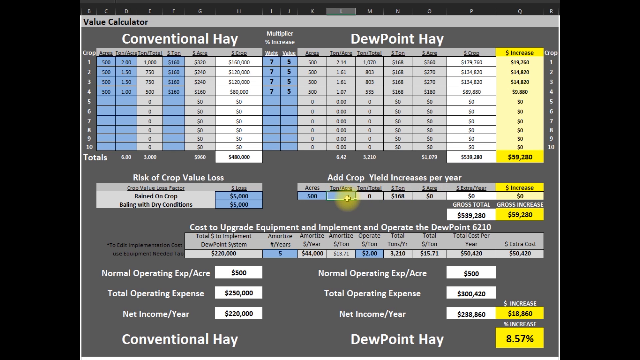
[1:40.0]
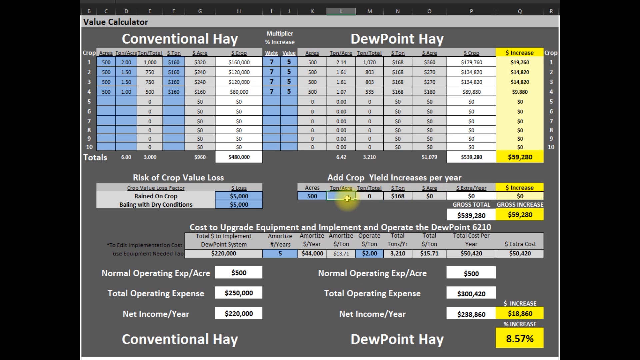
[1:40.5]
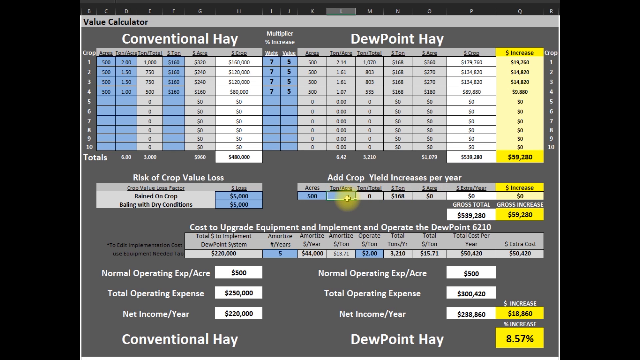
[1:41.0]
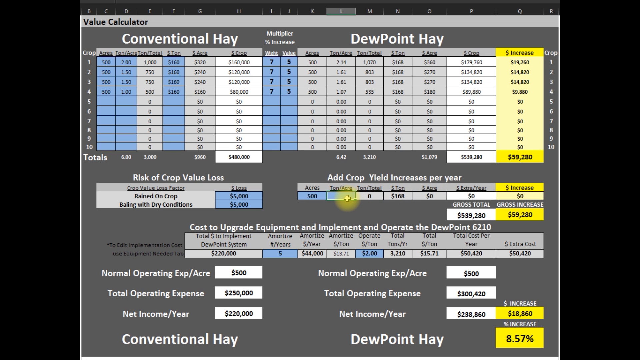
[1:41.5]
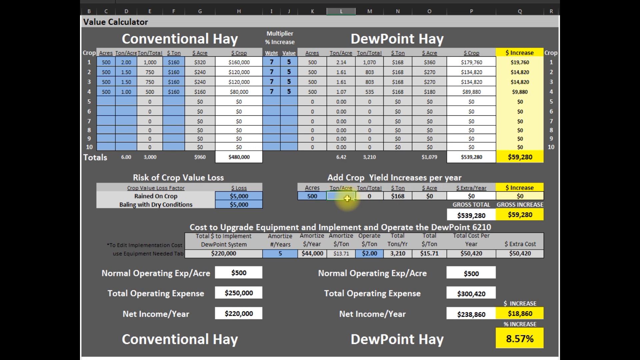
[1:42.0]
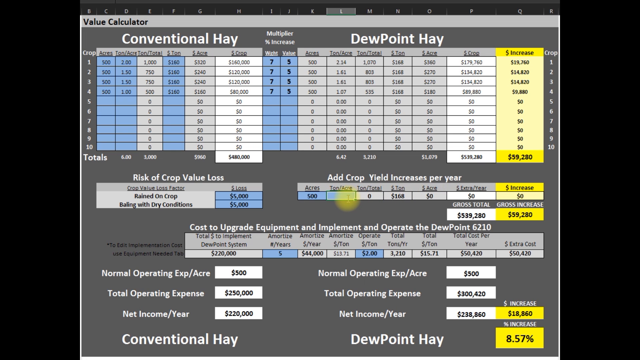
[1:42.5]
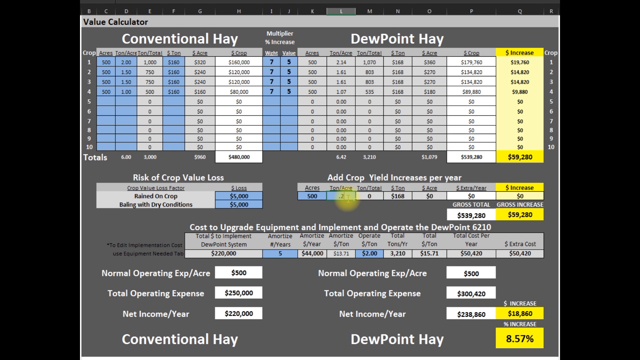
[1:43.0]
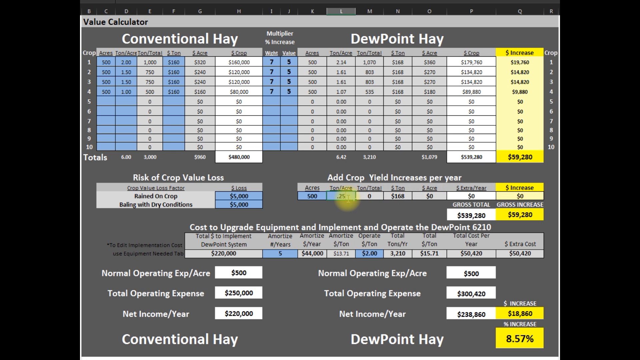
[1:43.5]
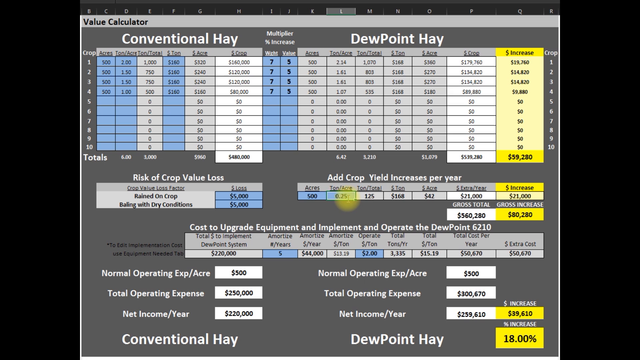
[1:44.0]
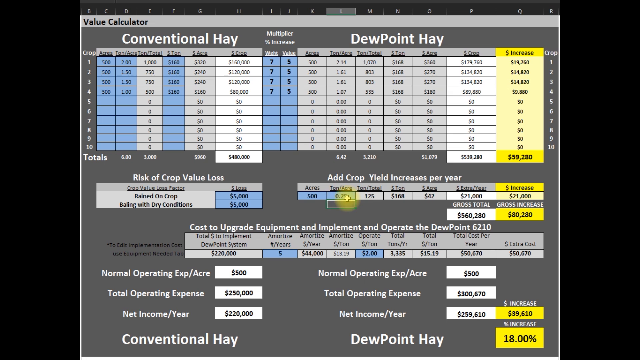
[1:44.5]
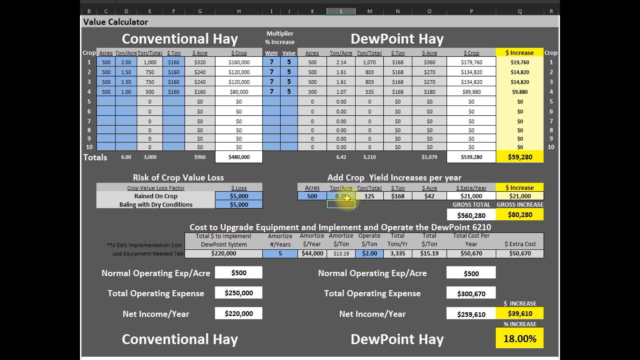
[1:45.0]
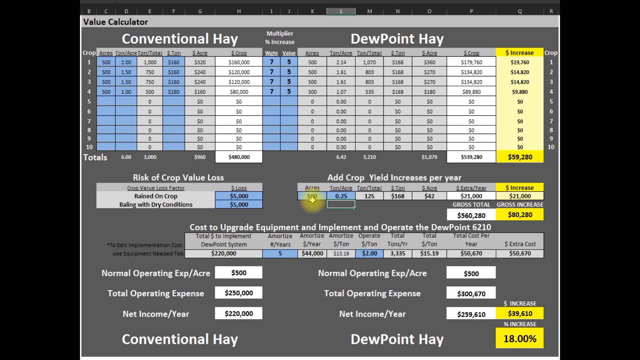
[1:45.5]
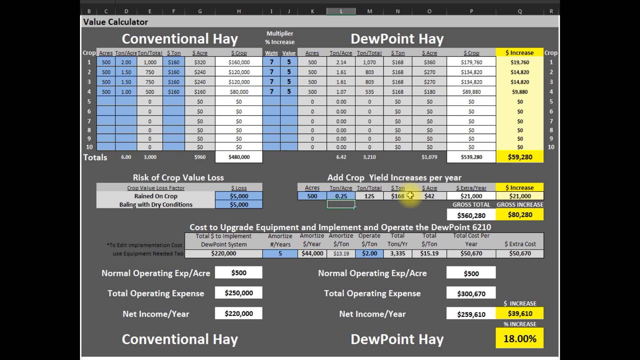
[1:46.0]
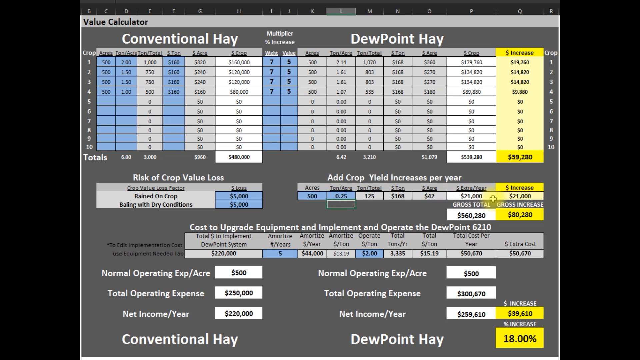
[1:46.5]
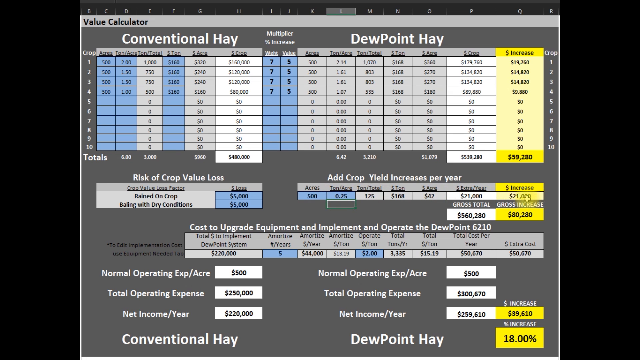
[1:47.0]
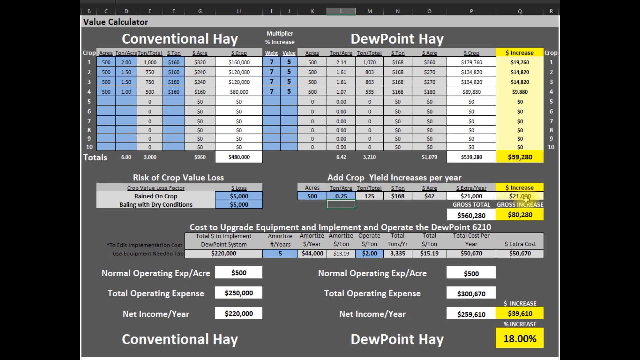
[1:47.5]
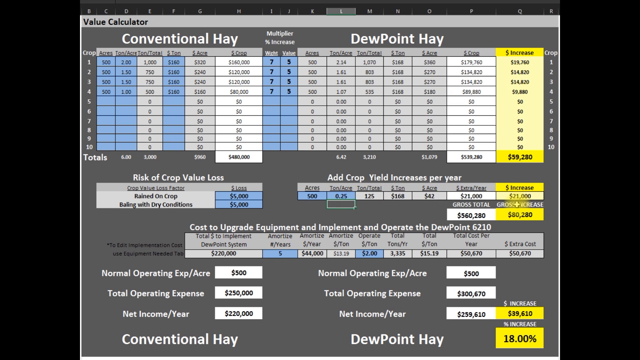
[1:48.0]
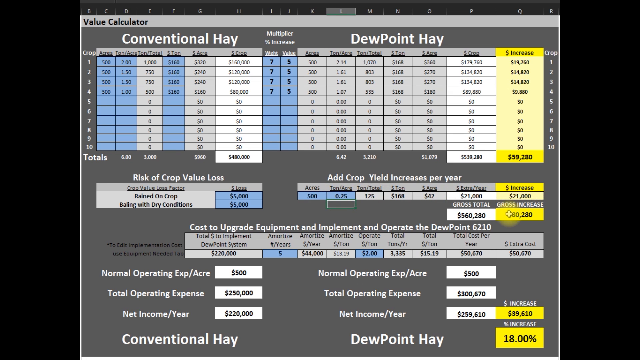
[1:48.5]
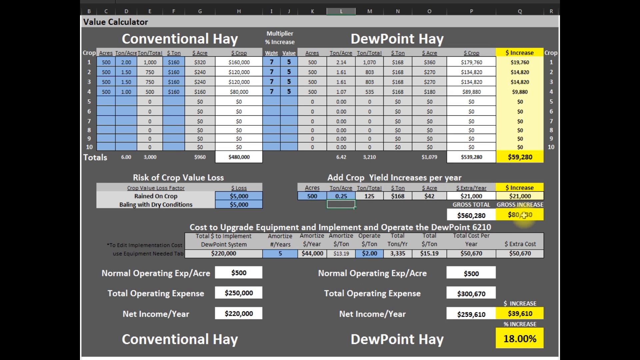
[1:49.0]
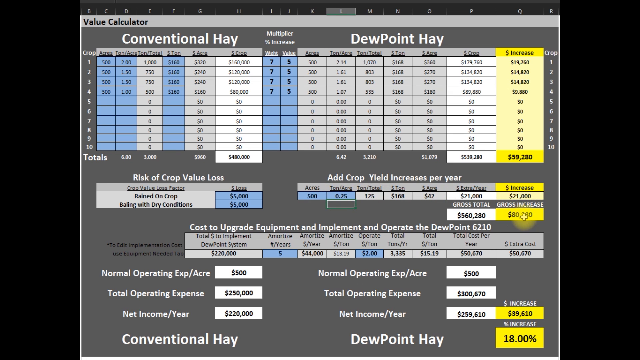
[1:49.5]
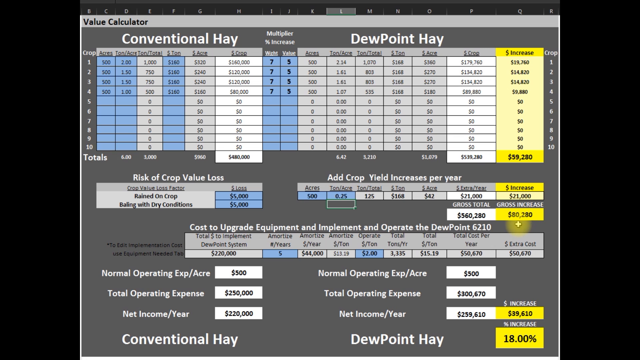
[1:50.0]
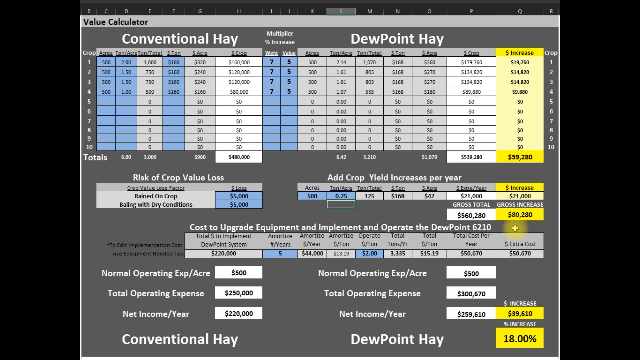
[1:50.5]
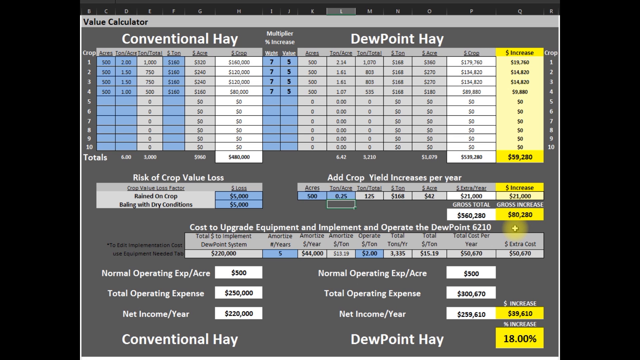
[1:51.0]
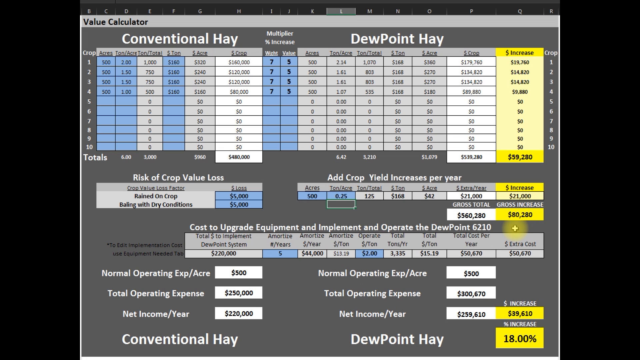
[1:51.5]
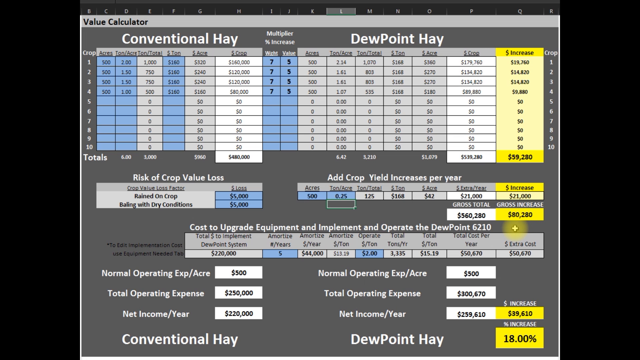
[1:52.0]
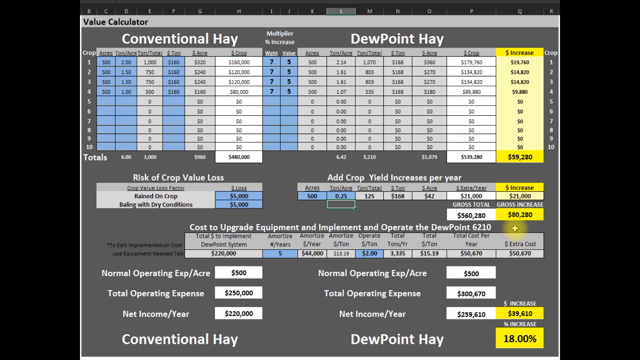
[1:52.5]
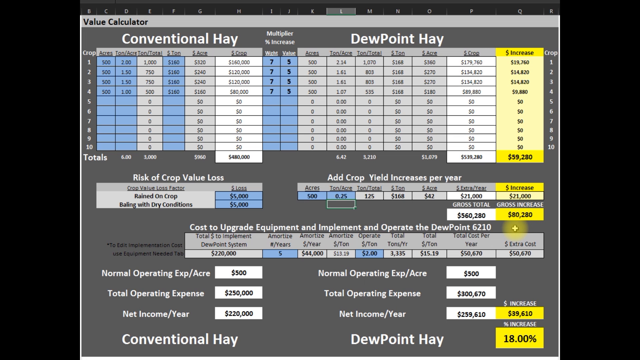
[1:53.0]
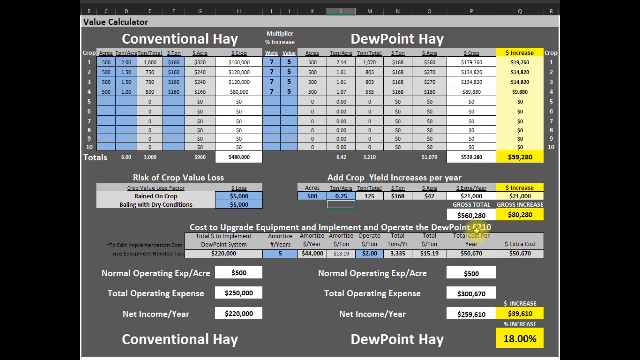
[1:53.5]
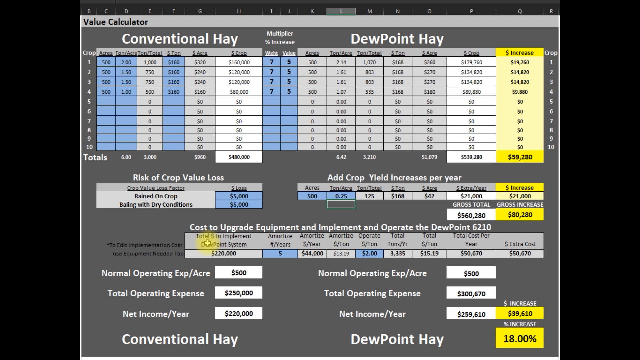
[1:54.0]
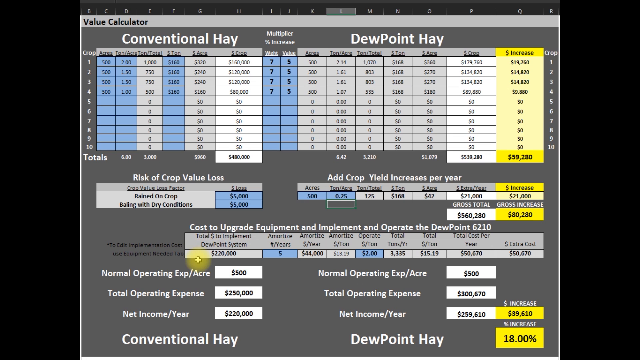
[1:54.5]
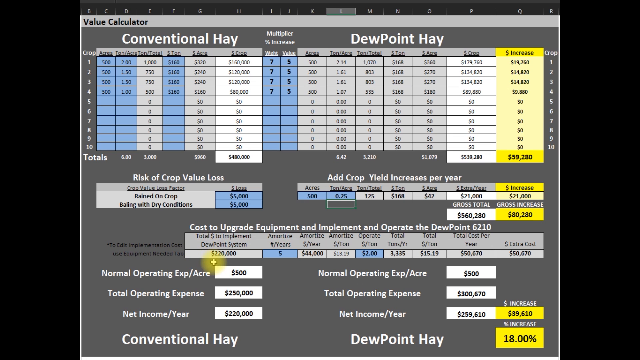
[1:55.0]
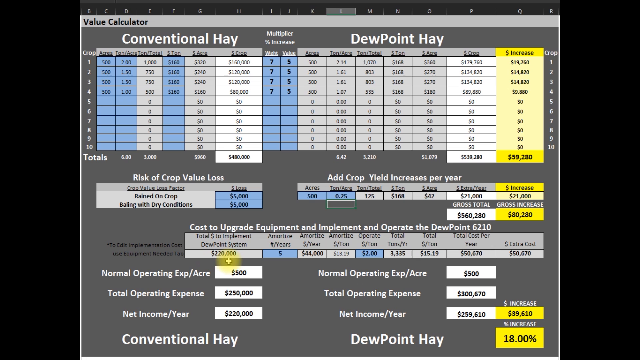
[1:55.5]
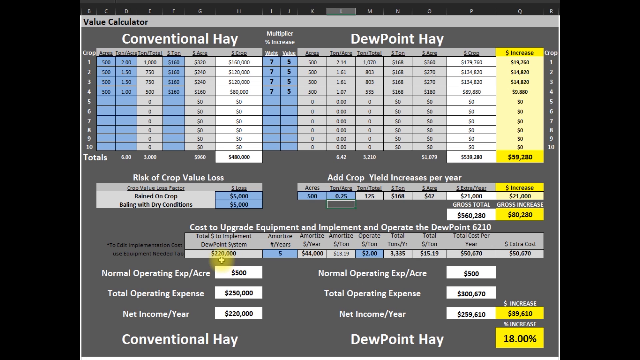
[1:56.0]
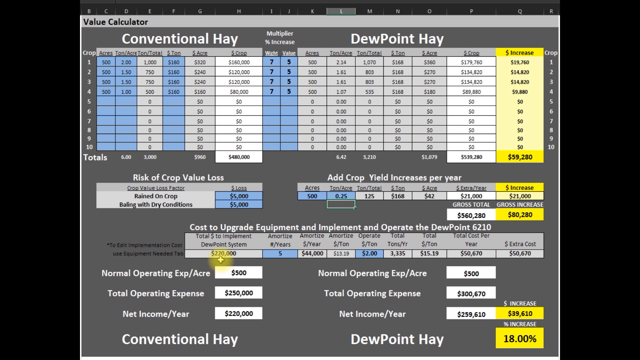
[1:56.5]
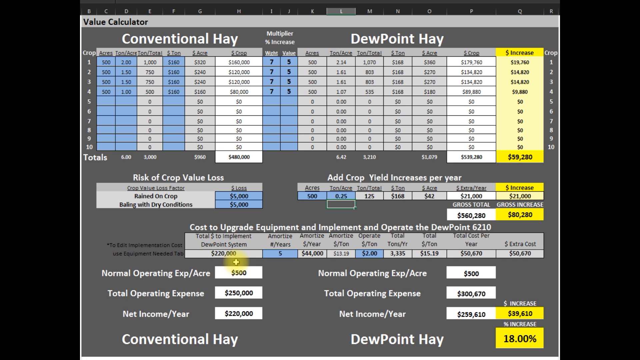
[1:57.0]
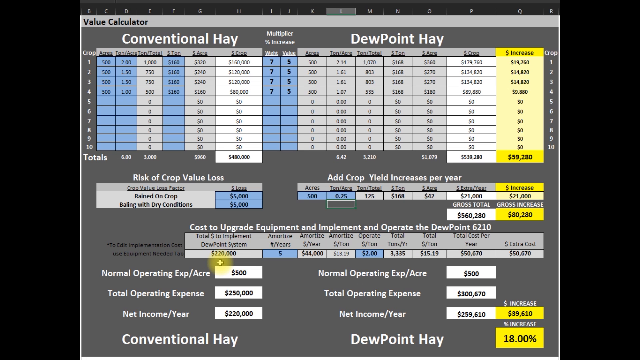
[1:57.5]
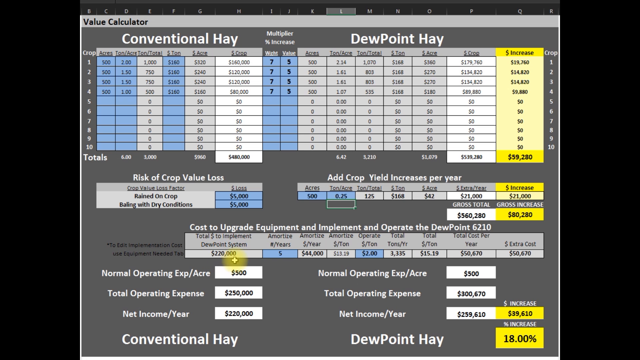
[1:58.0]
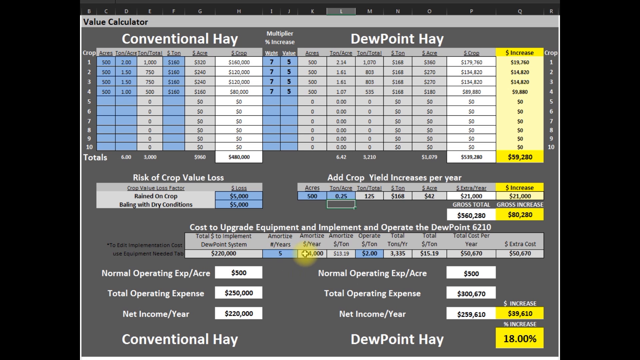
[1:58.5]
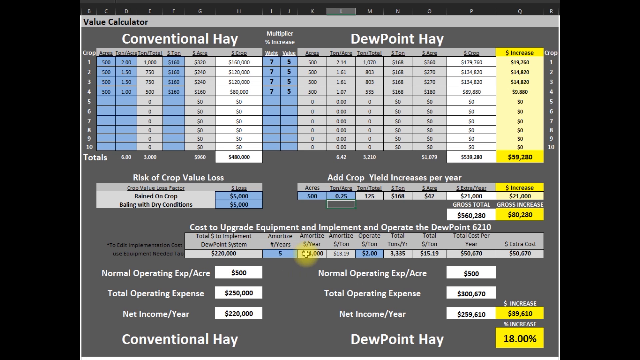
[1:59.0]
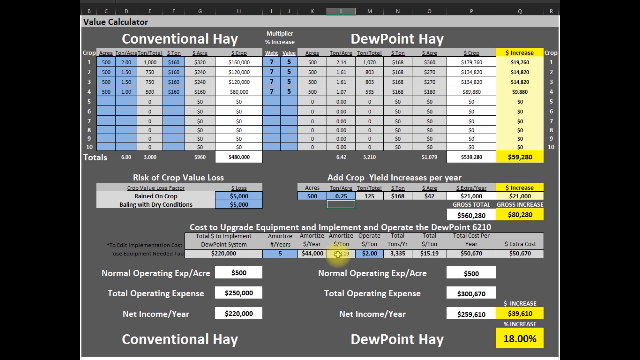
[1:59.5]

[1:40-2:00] The spreadsheet-like sheet shows "value calculator" in black in the upper left-hand corner. The person goes to a much smaller section on the right side, underneath the first section, called "add crop yield increases per year". Its labels are small and blurry when zoomed in, but the first one appears to say "acres". The first two spaces are blue. The person hovers over the second one and types in something like 0.2 or 0.1 percent, which changes a total highlighted in yellow that appears to be labeled "gross increase". The person then goes to the section for the cost to upgrade equipment and implement and operate the dew point, apparently 6210.